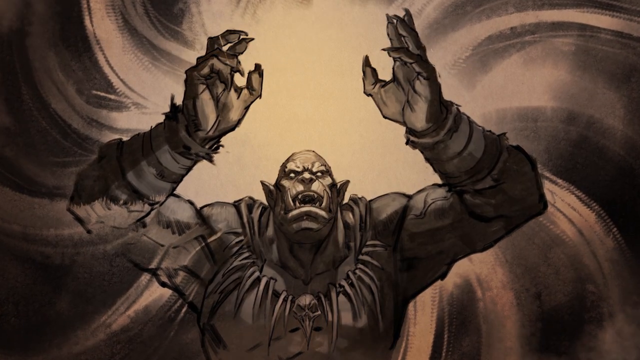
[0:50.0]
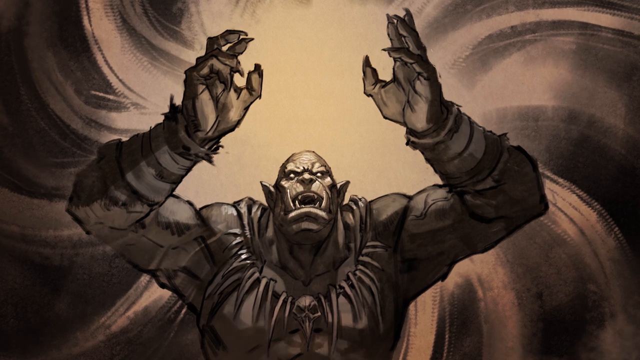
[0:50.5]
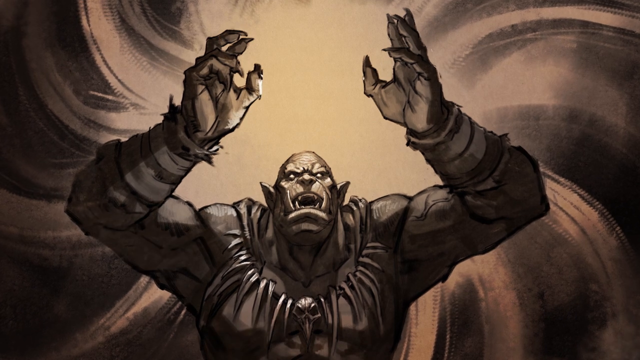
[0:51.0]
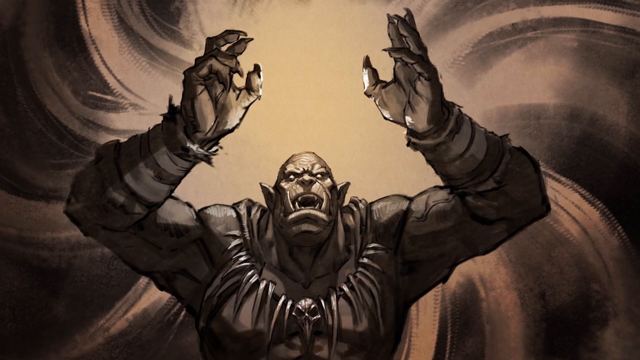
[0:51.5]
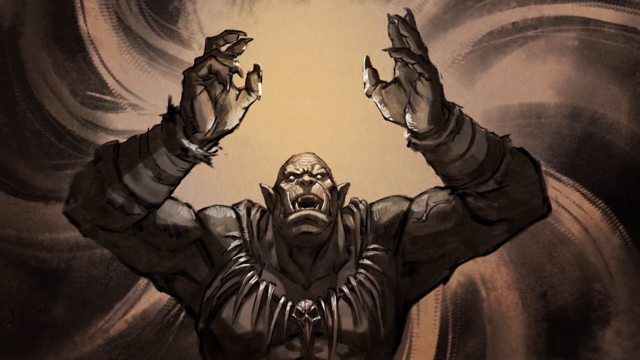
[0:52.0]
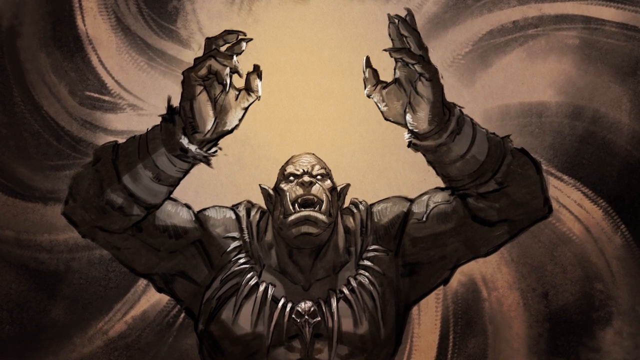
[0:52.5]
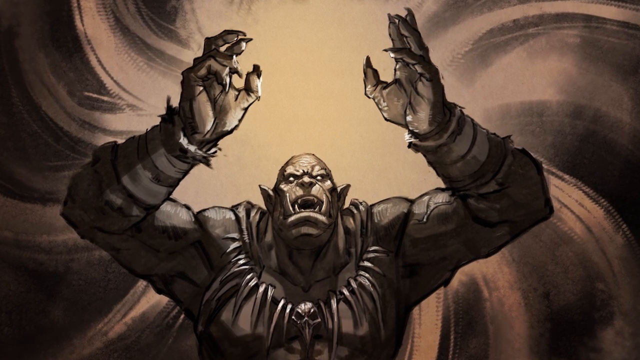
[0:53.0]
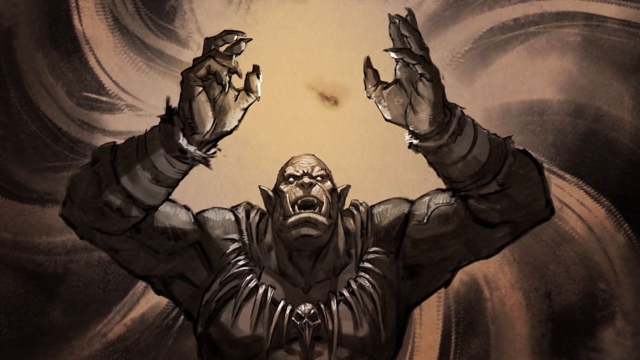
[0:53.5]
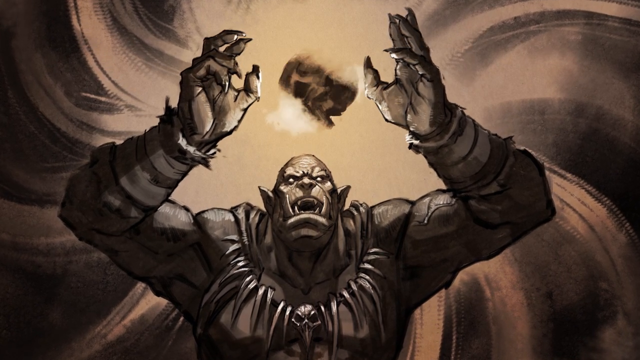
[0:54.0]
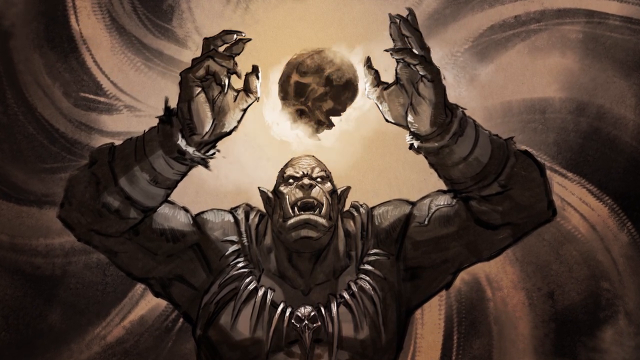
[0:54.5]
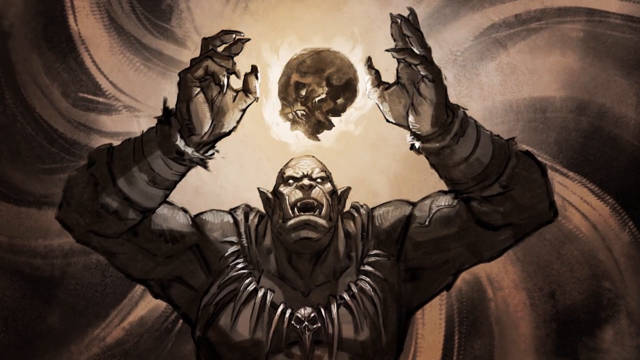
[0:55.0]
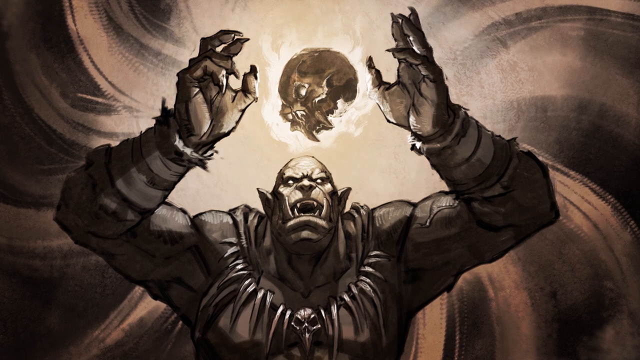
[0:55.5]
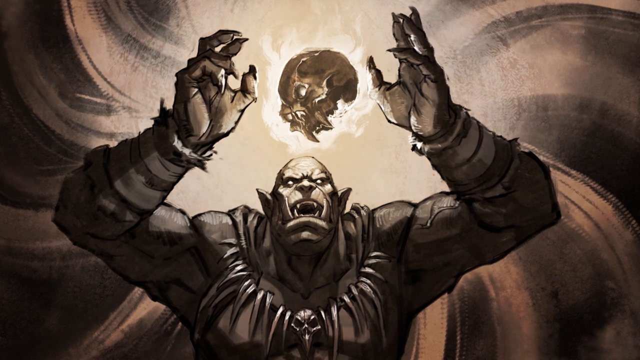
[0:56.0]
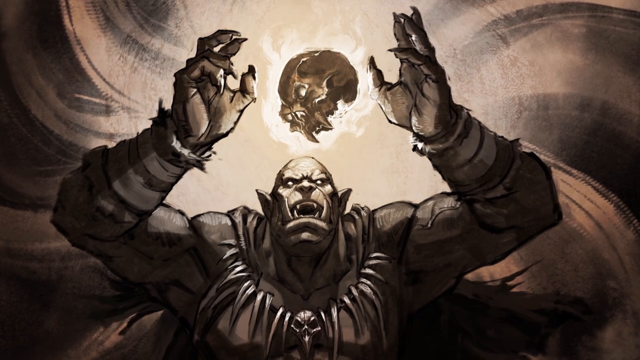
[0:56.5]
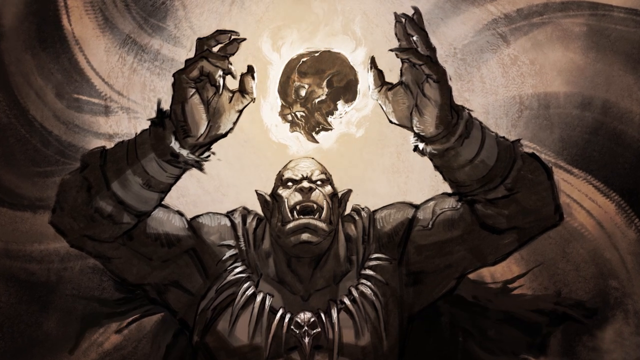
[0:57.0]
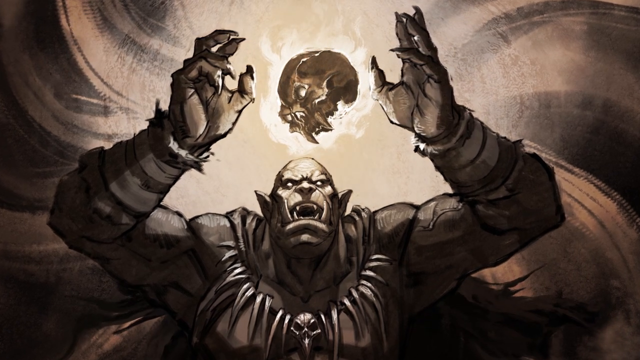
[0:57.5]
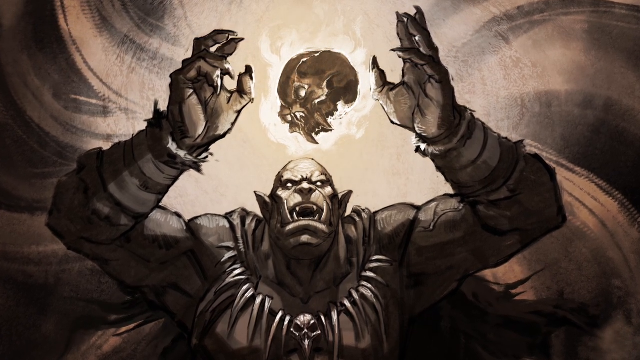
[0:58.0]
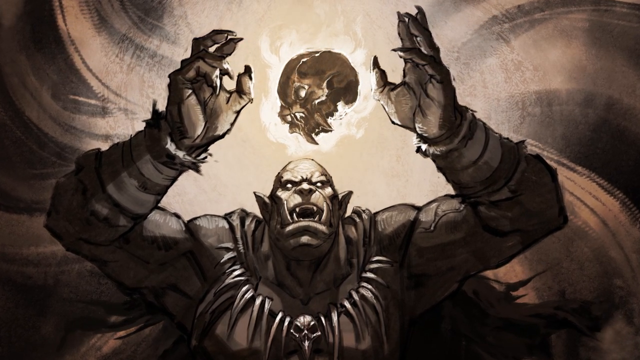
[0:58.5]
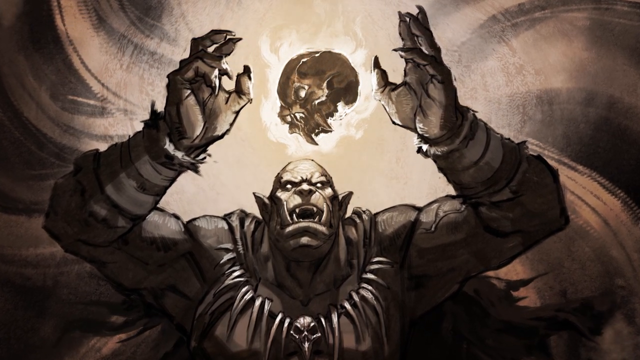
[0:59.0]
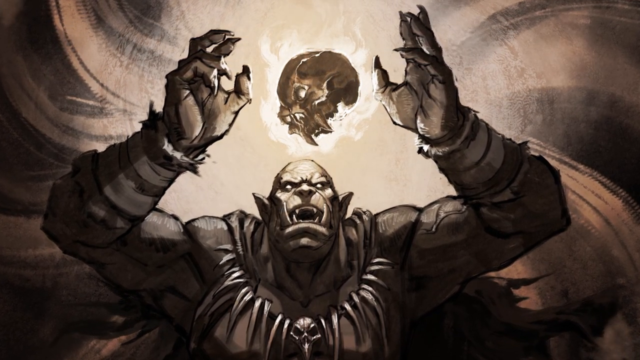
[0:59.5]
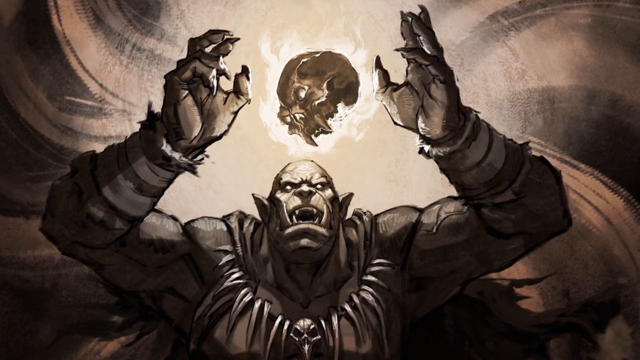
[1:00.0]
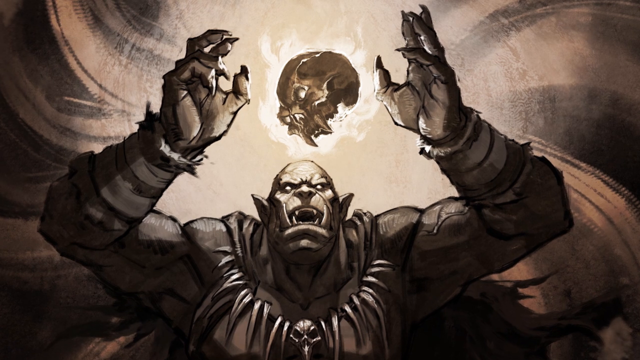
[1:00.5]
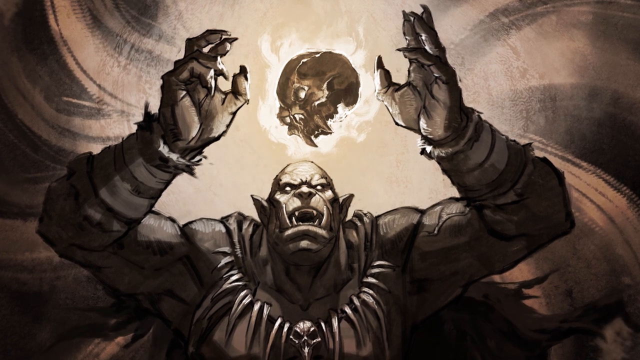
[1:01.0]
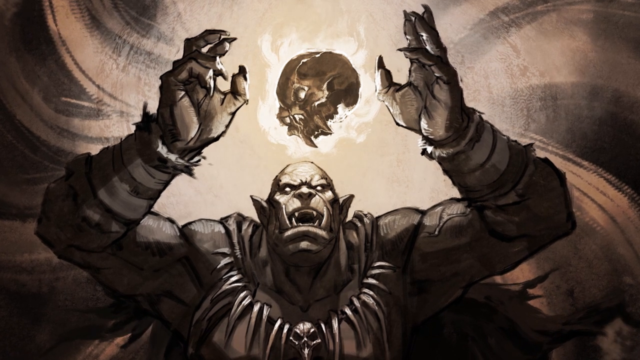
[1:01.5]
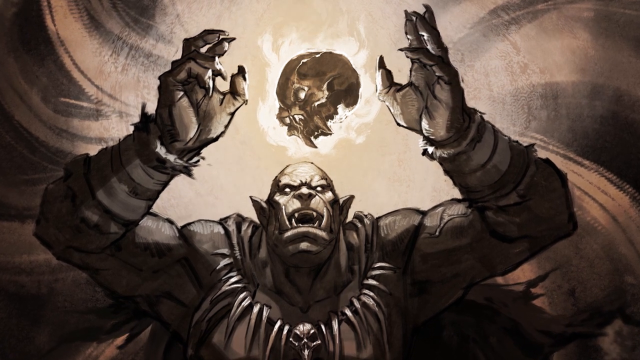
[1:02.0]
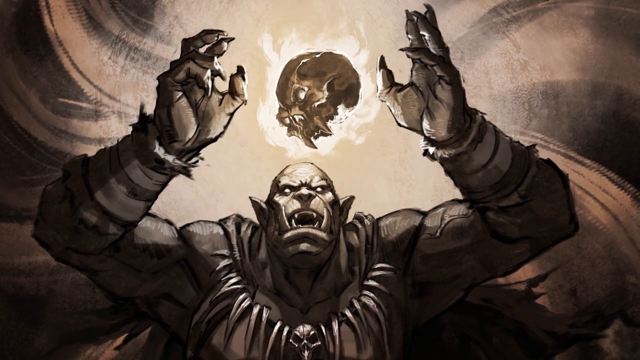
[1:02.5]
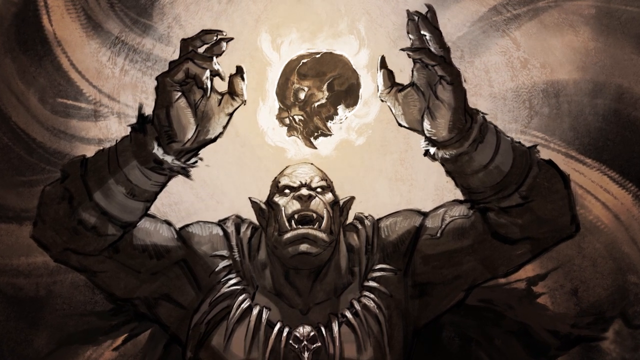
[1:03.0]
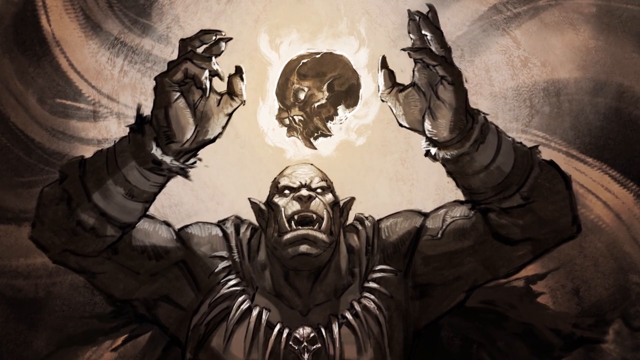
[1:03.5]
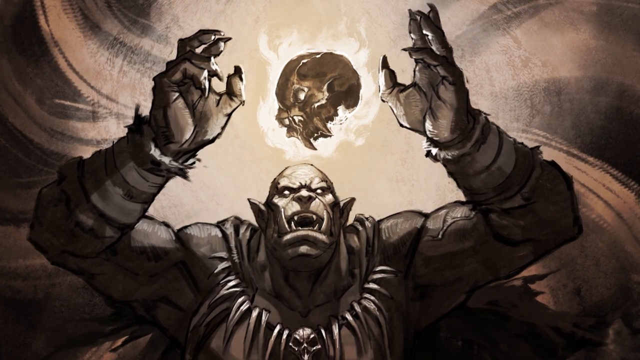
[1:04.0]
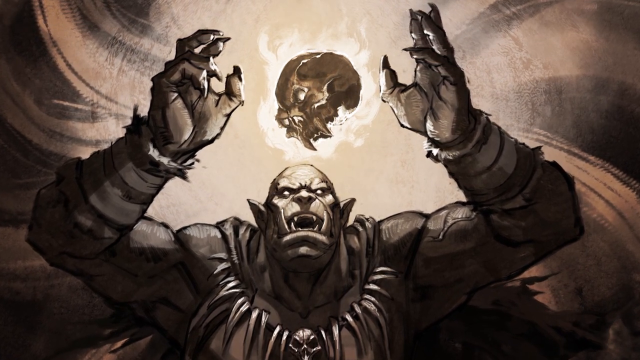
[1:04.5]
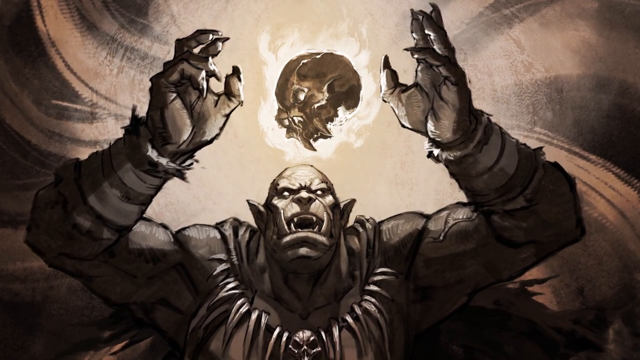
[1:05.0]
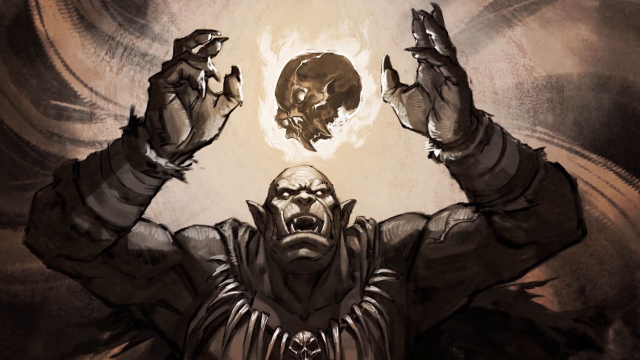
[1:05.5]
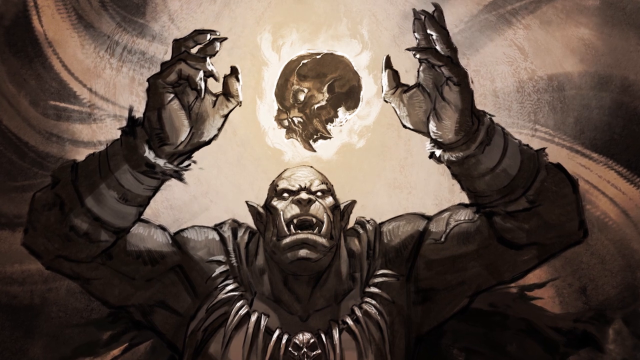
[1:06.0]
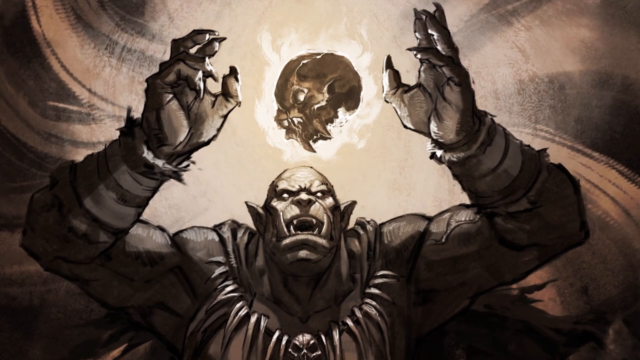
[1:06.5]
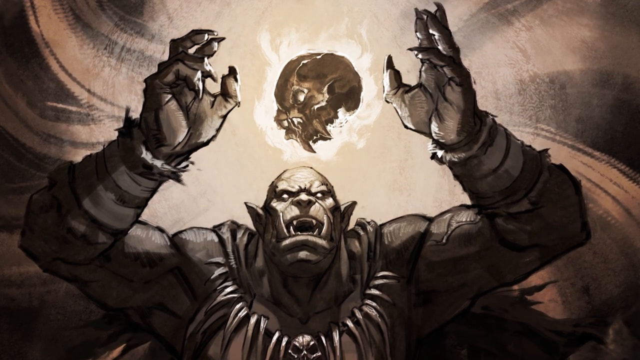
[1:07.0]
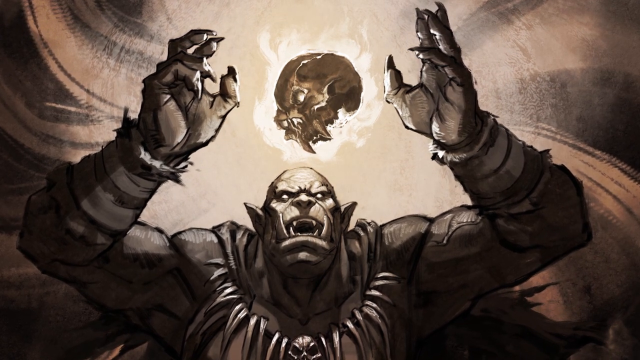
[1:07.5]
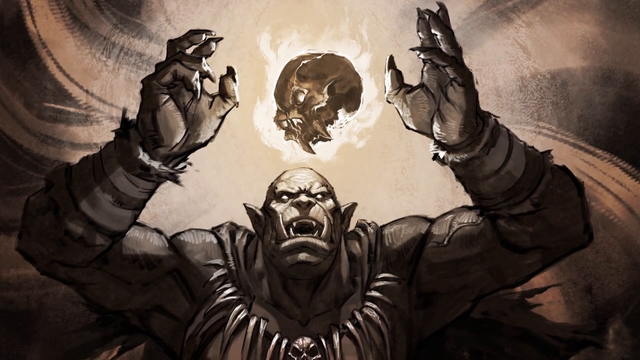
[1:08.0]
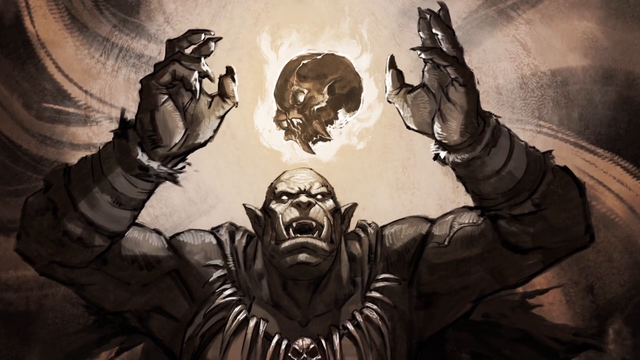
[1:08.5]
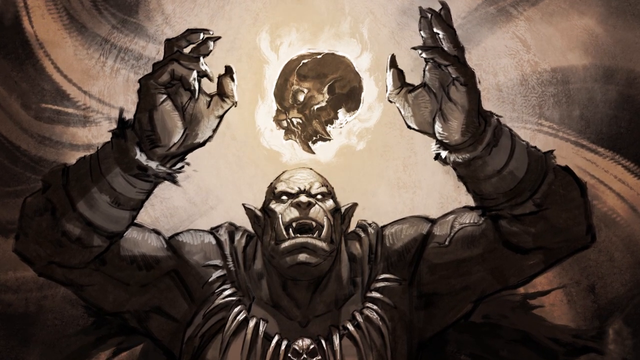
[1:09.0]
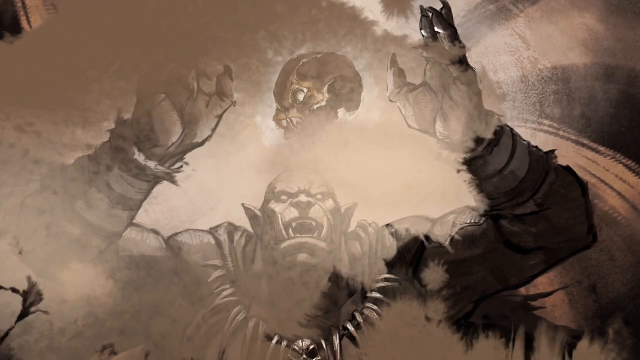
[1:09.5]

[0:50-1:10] The orc has both hands up and looks surprised by something, or like he is praying to something. He is big and muscly and wears something like cufflinks, plus what may be a necklace with different fangs or teeth on it and a skull in the middle. Glowy shadows start to appear on his hands and on his necklaces. Then a skull slowly appears in the frame; it is not a human skull but apparently that of another orc, since it has large fangs, though it could be another race. It is floating between his hands and almost has flames around it. He looks shocked and surprised to have this item, yet as if he wanted it. The image then does the sand-like transition to the next image. Everything is in black and tan.